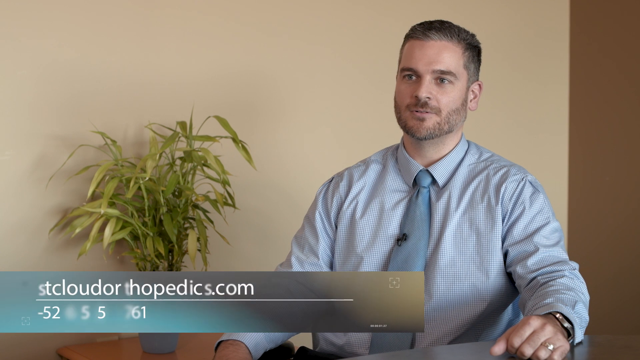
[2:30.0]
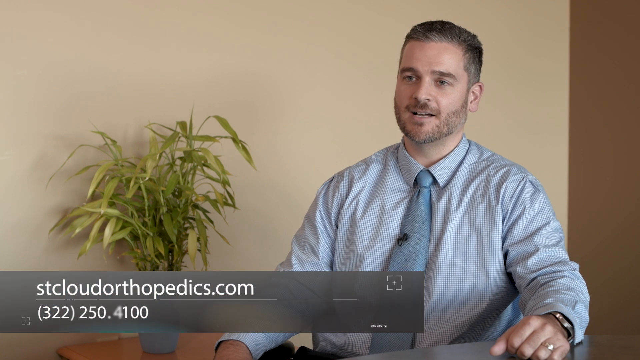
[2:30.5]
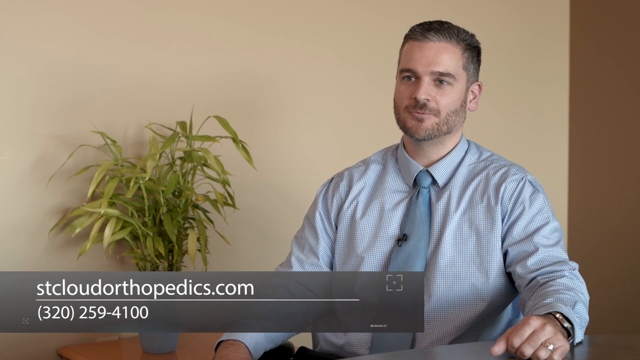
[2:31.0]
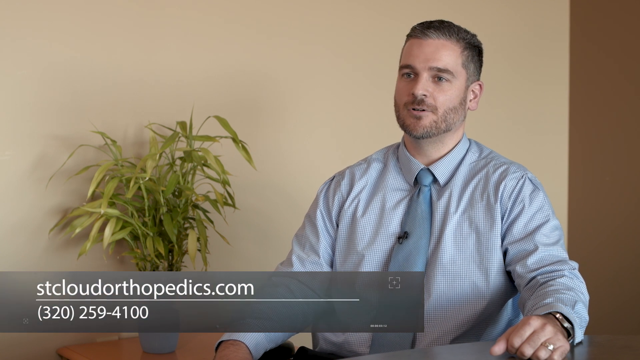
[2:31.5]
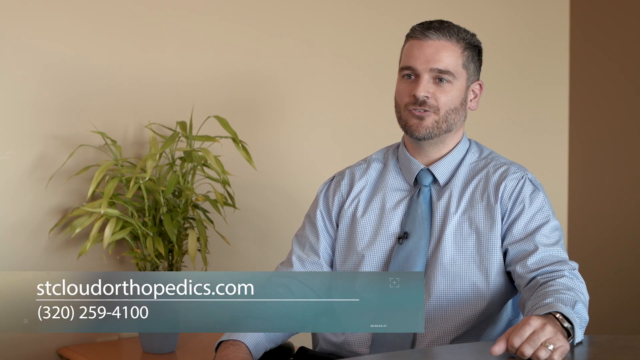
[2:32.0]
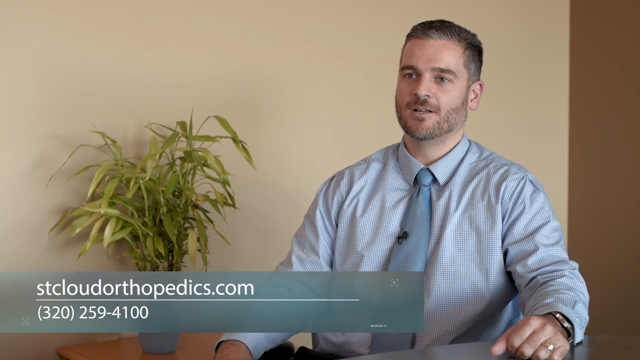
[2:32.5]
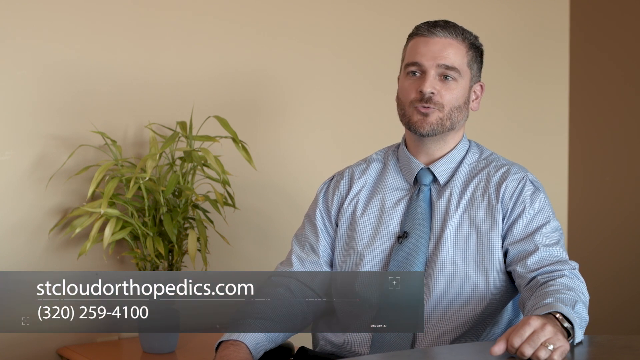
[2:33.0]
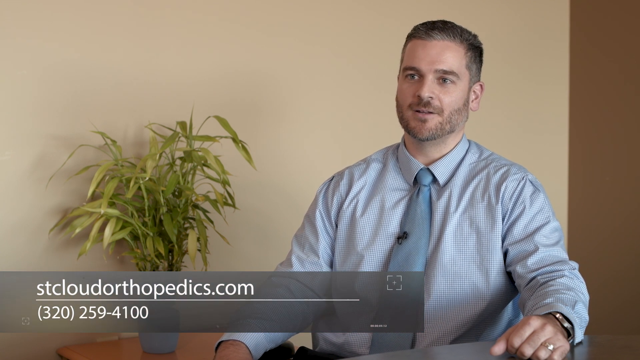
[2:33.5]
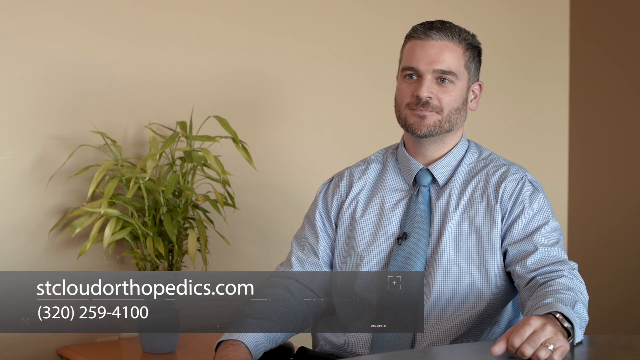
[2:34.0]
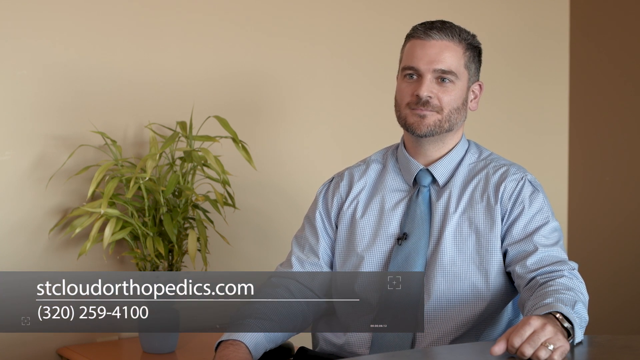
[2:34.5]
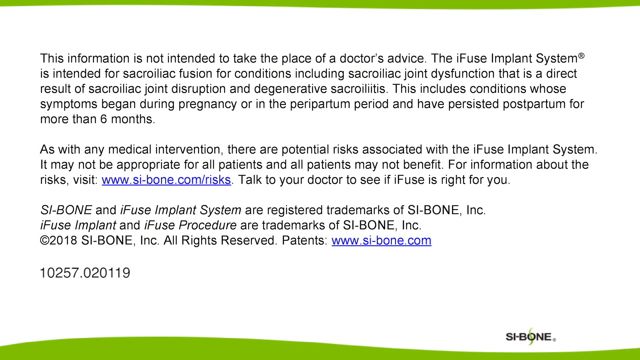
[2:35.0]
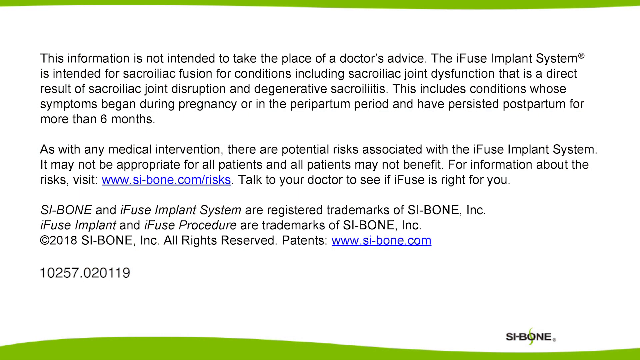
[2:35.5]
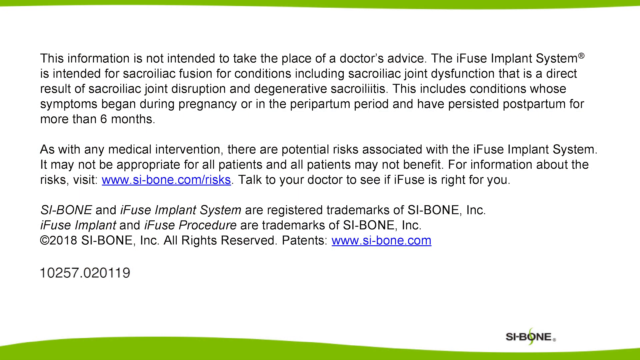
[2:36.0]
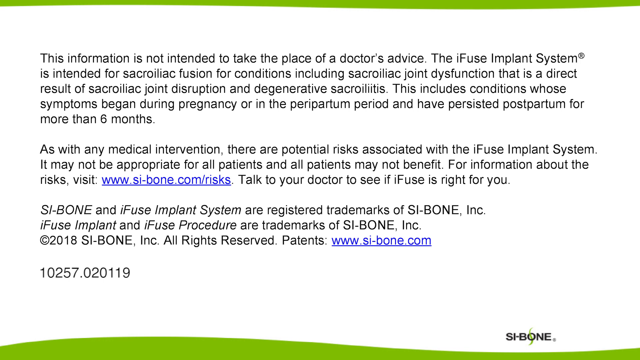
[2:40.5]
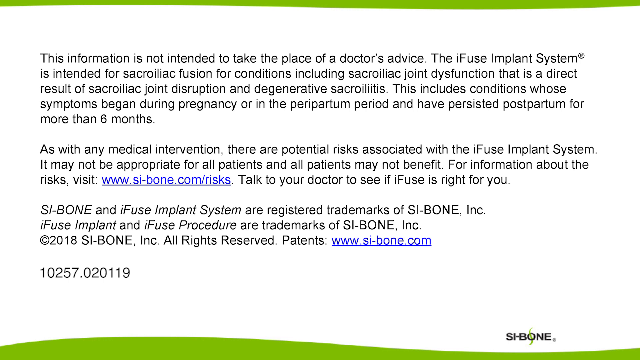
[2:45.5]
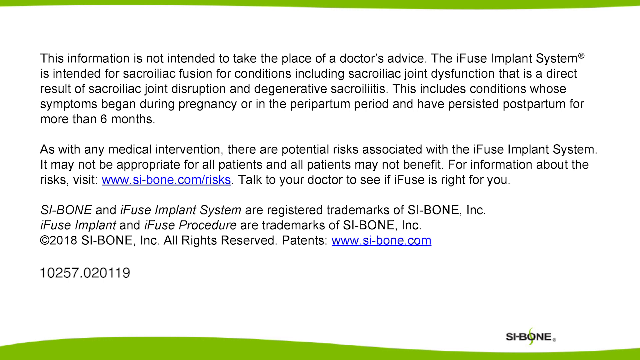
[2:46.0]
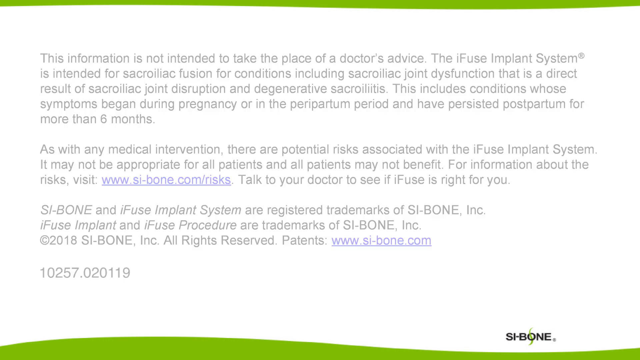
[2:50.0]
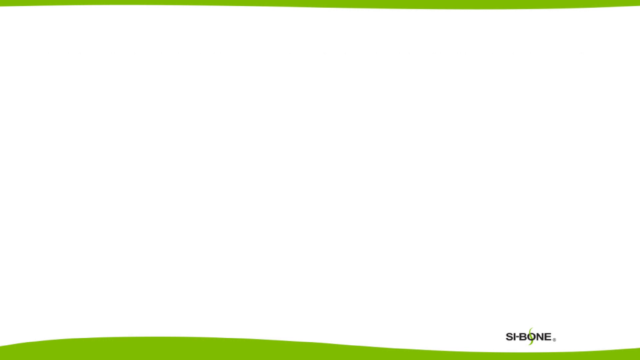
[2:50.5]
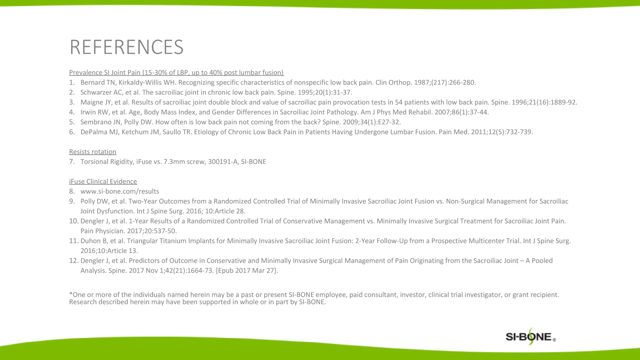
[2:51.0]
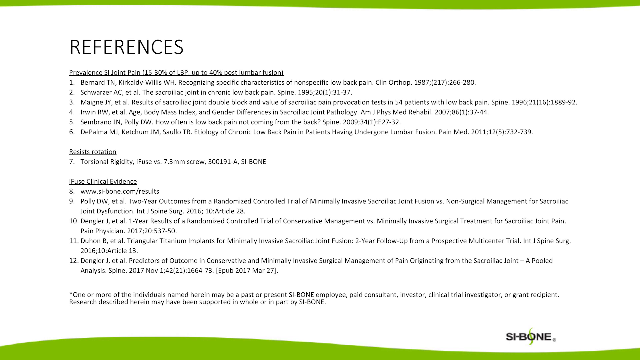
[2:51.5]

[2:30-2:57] Text reads "St. Cloud Orthopedist.com" with the number "320-259-4100". The background then turns white, and three paragraphs appear in black font, reading "this information is not intended to take place of a doctor's advice. The iFuse implant system is intended for sacroiliac fusion for conditions including sacroiliac joint dysfunction that is a direct result of sacroiliac joint disruption and degenerative" sacroiliitis, continuing "this includes conditions whose symptoms may begin during pregnancy or in a peripartum period and have persisted postpartum for more than six months" and "as with any medical intervention, there are potential risks associated with iFuse implant system."